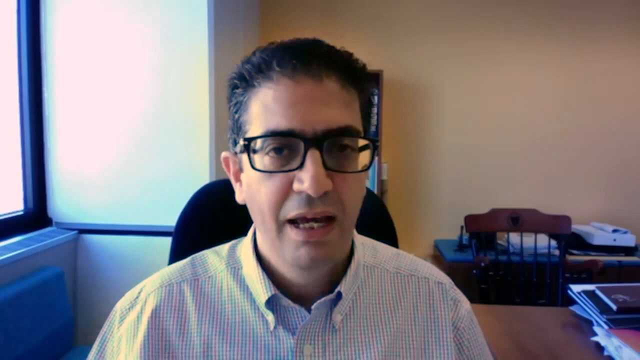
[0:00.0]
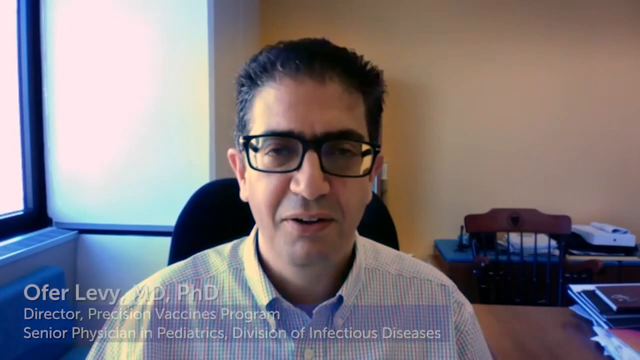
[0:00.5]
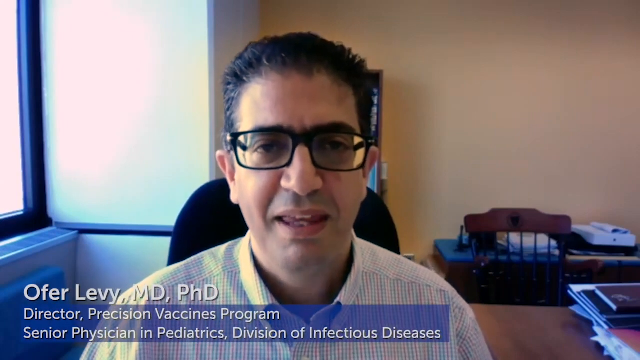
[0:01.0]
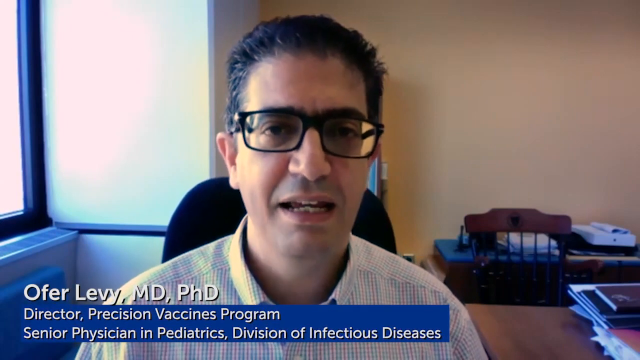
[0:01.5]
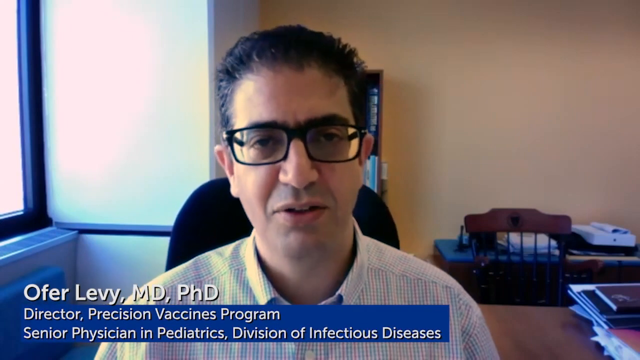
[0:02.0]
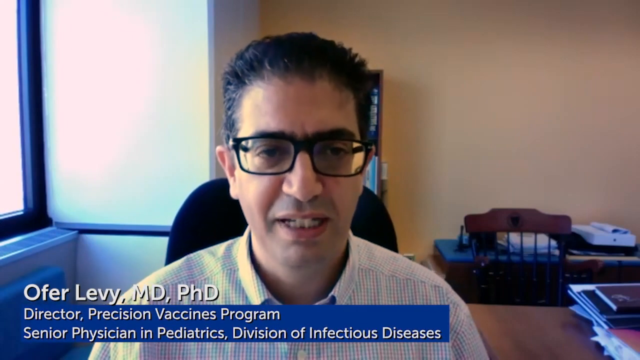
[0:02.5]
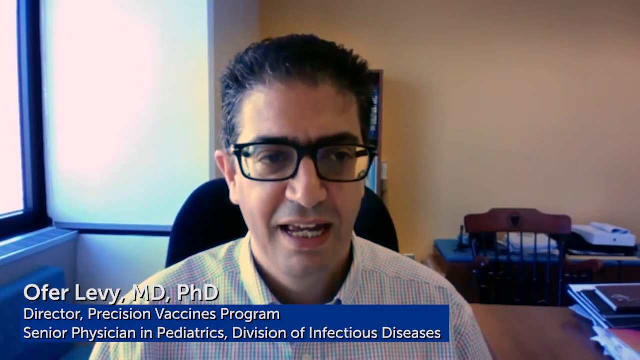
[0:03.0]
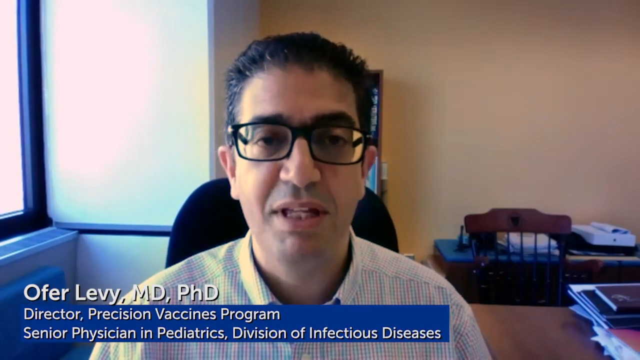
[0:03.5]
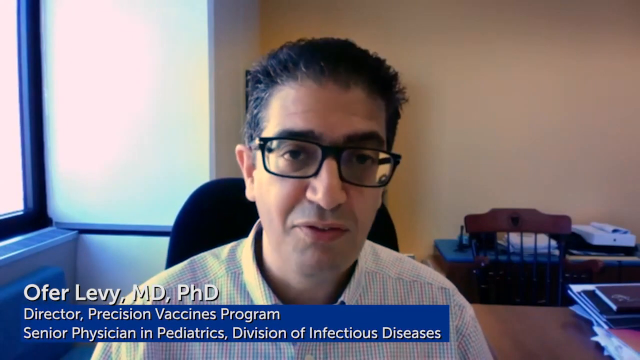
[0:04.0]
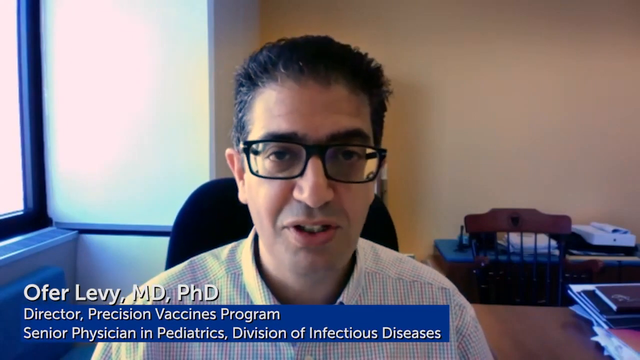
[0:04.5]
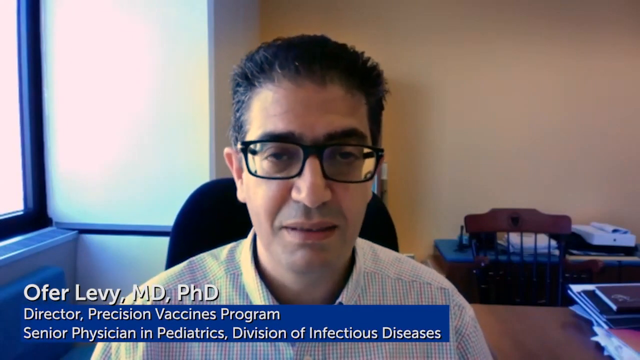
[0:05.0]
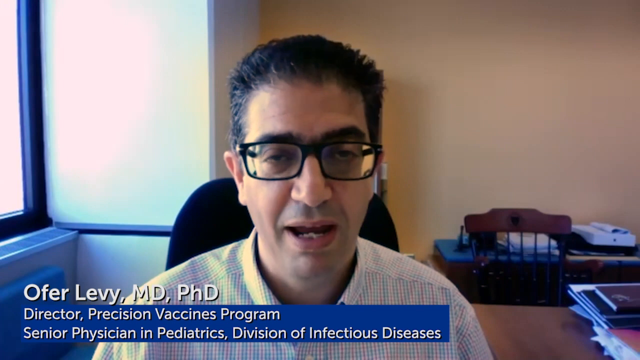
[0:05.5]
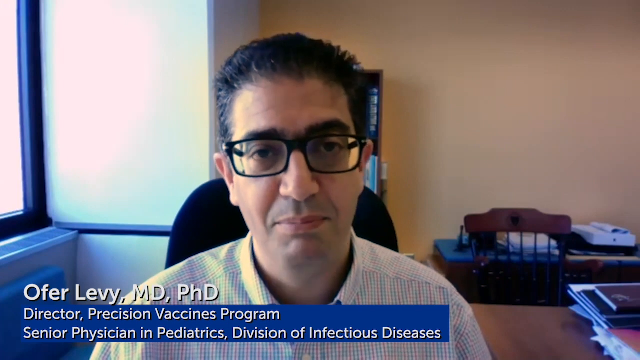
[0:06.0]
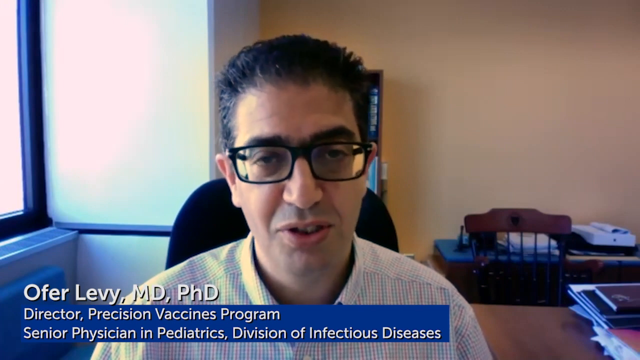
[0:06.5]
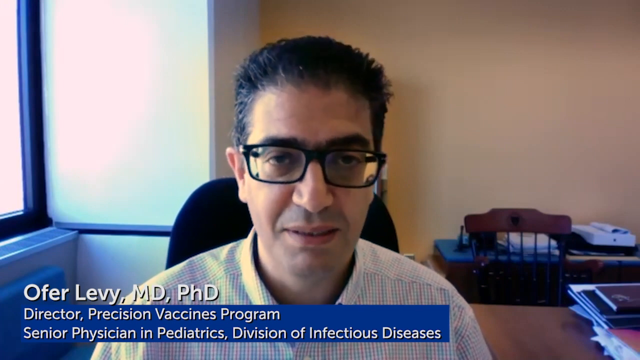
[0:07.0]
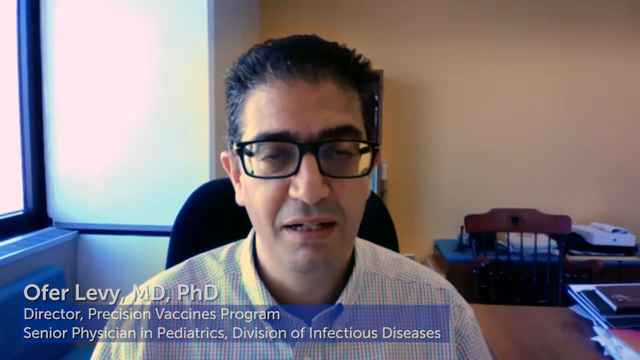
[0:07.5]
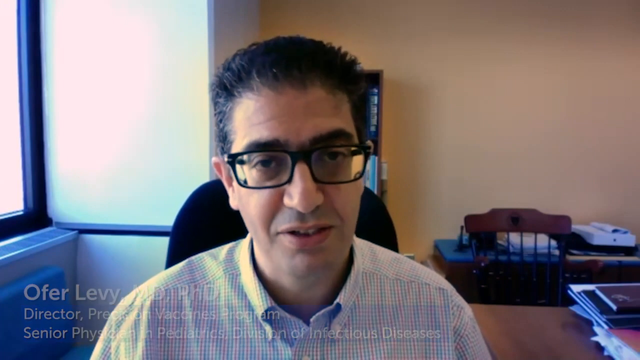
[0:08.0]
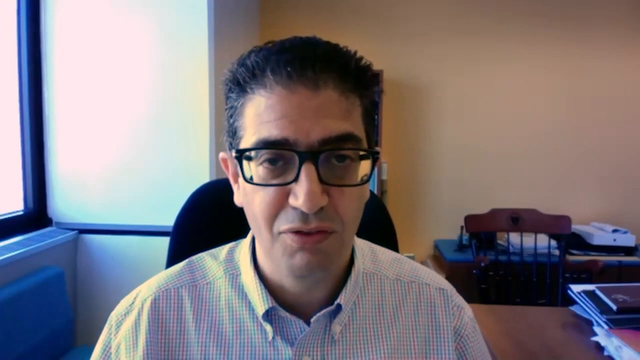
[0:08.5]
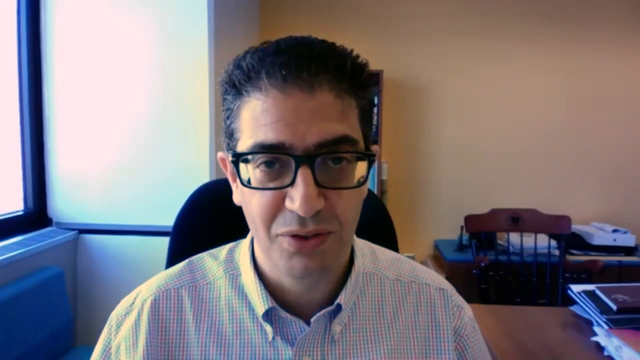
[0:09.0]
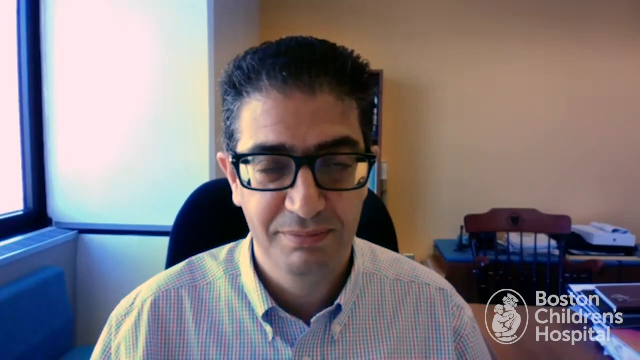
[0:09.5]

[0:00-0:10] A man, Offer Levy, MD, PhD, speaks while moving his head from left to right, very animated as he talks. He has dark hair, large eyebrows and black glasses, and wears a light-colored button-up shirt with the top button open. He is sitting in a high-back black chair that is oval-shaped at the back. Behind him is an ivory-colored wall with blue framing around it, and a window framed in blue is visible on the left side. A very small piece of wall directly behind him on the left has a blue tint to it. To his right is a brown wooden chair with seven slats and a fairly thick top.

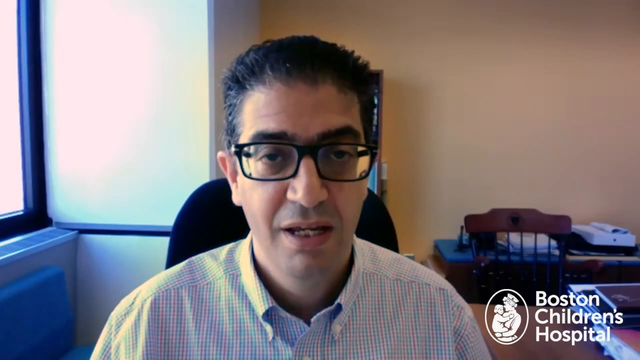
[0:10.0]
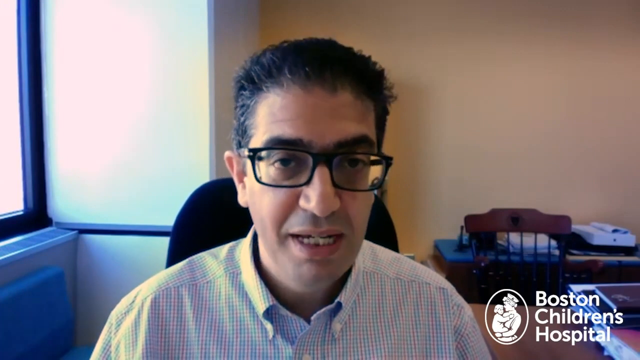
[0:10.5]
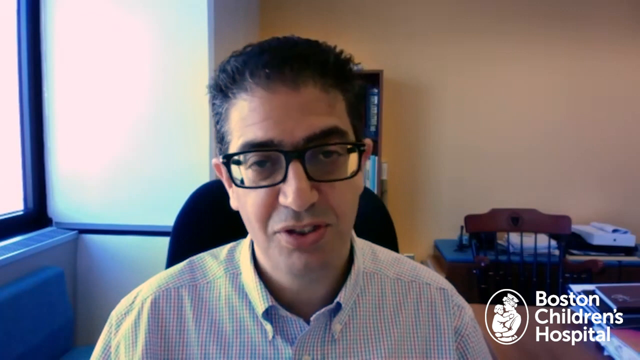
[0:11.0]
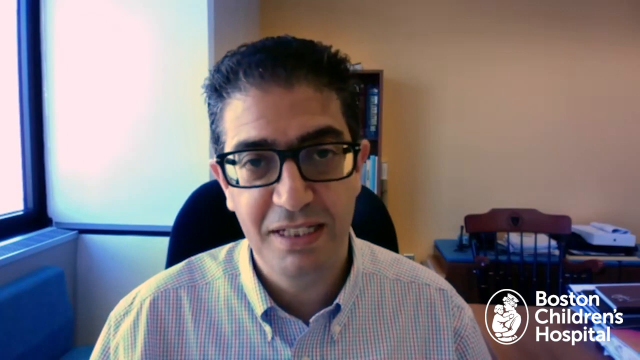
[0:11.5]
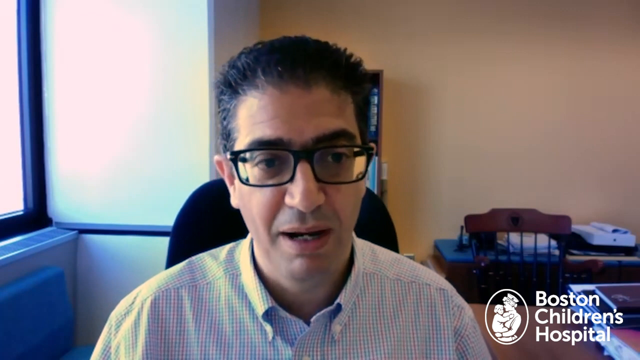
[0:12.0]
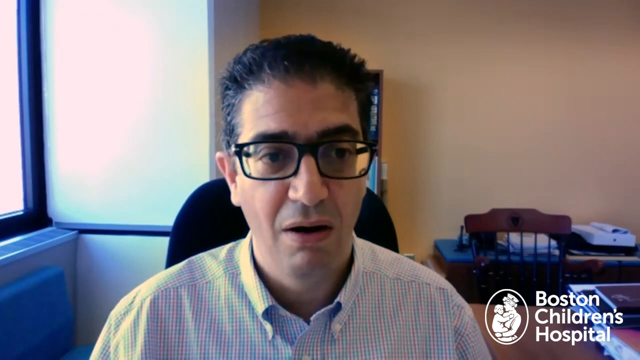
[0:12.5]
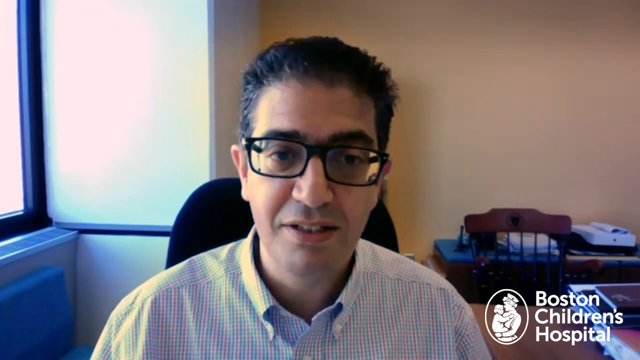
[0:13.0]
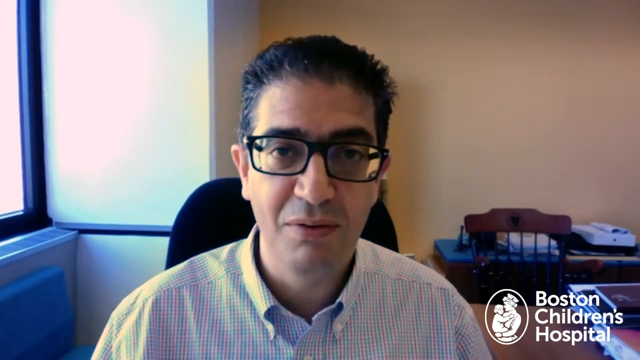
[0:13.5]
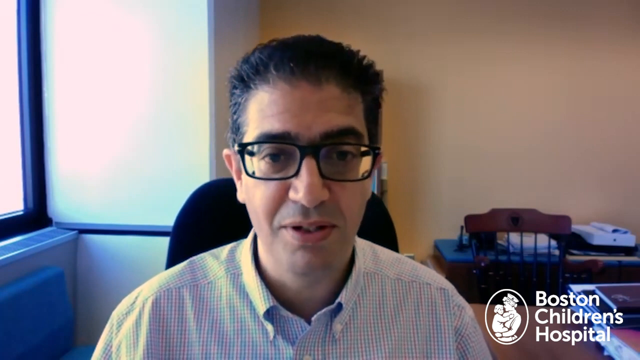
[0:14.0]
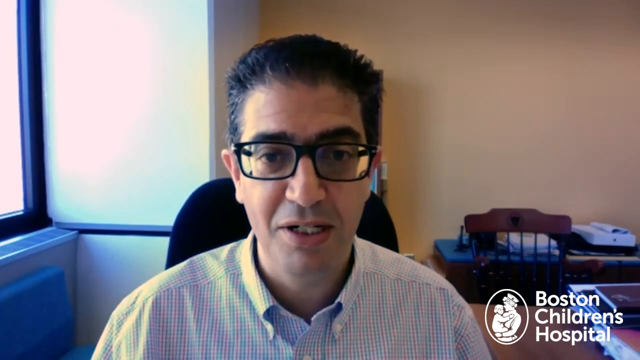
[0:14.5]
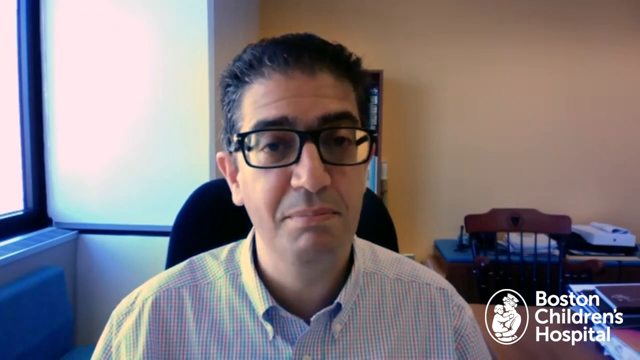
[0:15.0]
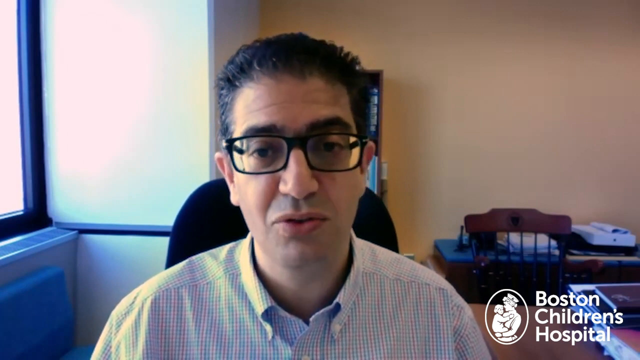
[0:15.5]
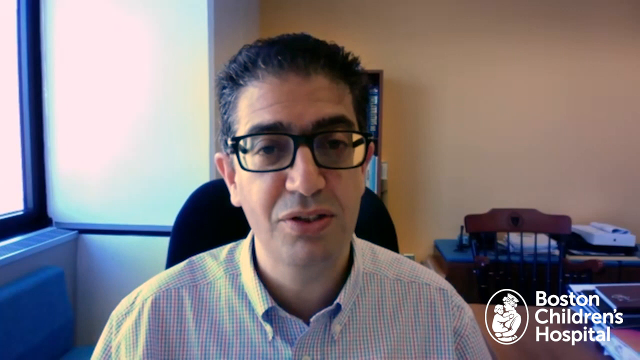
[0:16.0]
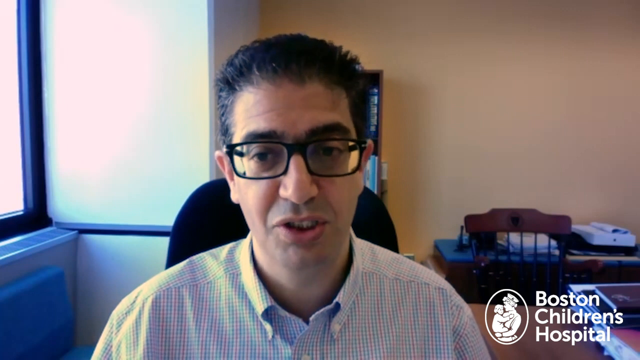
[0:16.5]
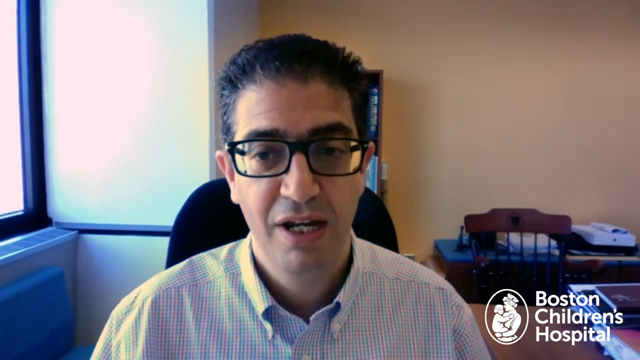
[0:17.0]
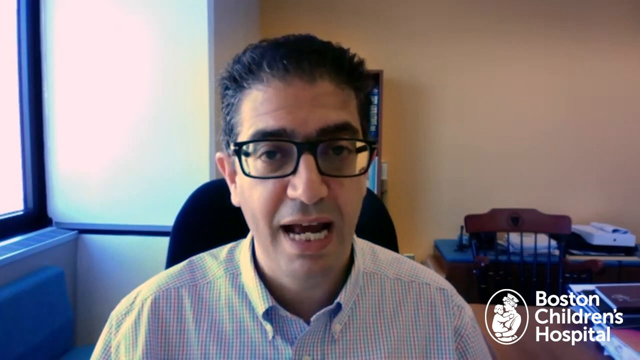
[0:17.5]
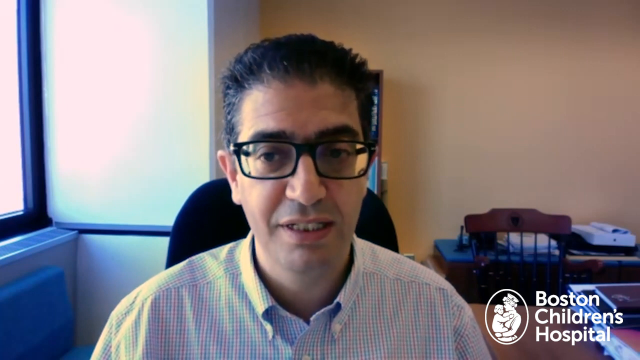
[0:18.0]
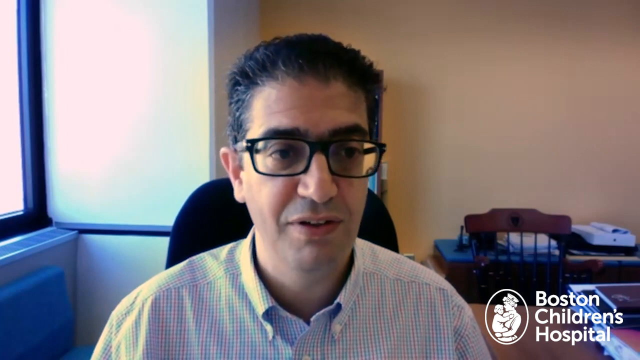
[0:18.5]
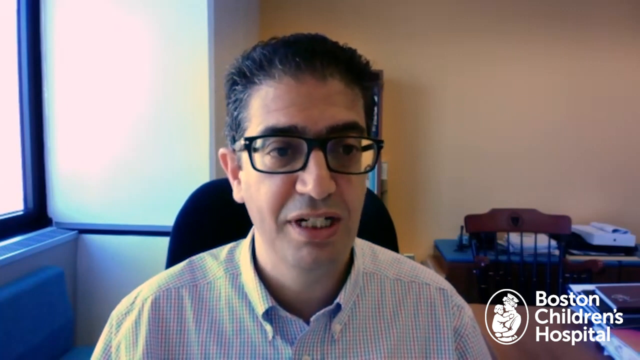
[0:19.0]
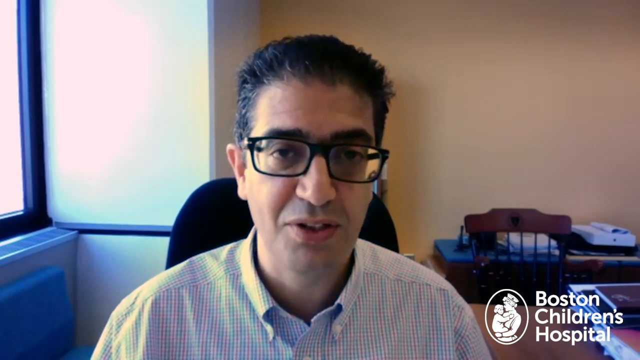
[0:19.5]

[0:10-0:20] Sitting in the middle of the screen, the man moves his head from left to right as he speaks directly toward what is in front of him. He wears black glasses and blinks occasionally, with a very solemn look on his face. A tan ivory wall is behind him toward the right. Behind the chair is a table, half of which shows on the right side, with a blue covering on its left side. On the right side of the screen the text "Boston Children's Hospital" appears, and to its left is an oval emblem showing a small baby being held by what looks like a female wearing a cap.